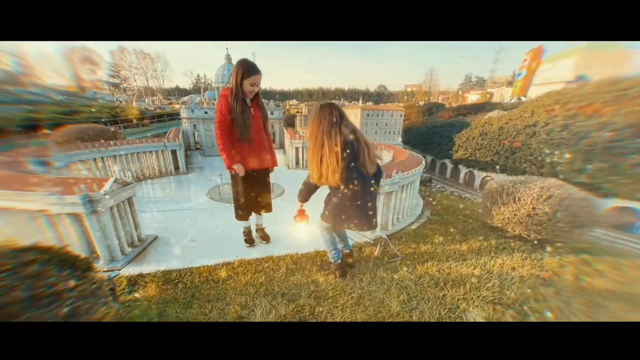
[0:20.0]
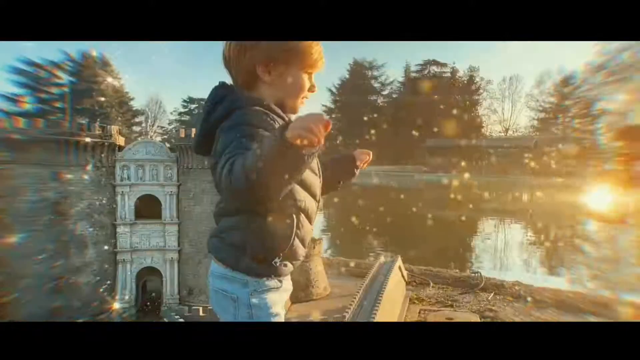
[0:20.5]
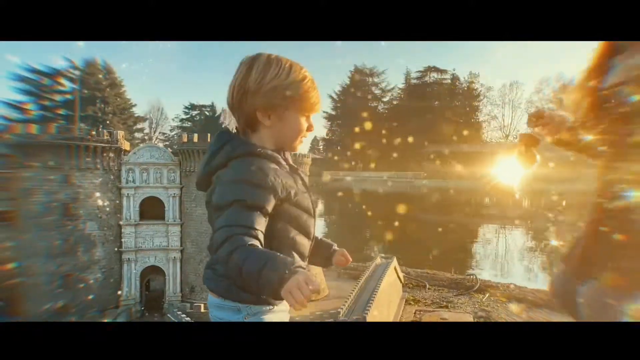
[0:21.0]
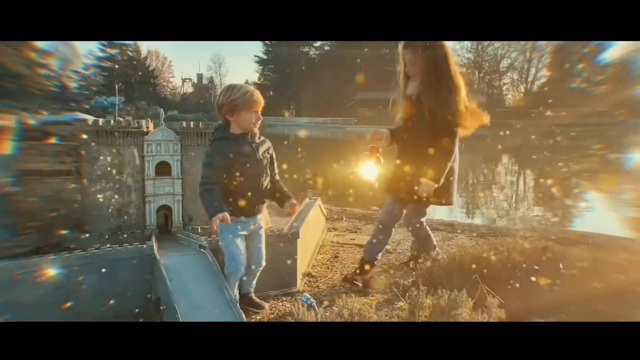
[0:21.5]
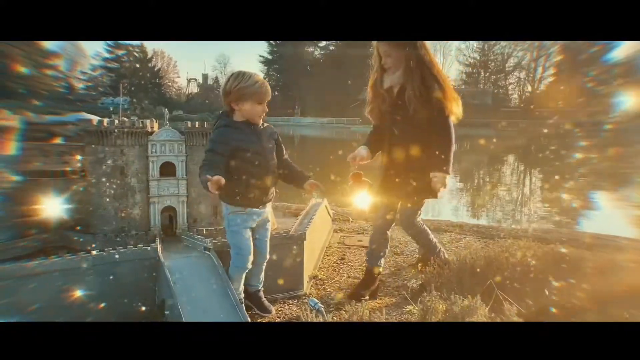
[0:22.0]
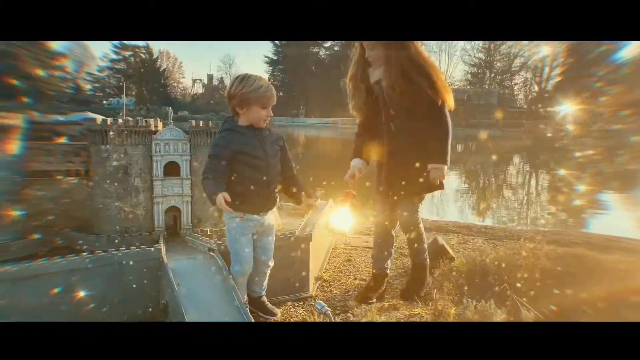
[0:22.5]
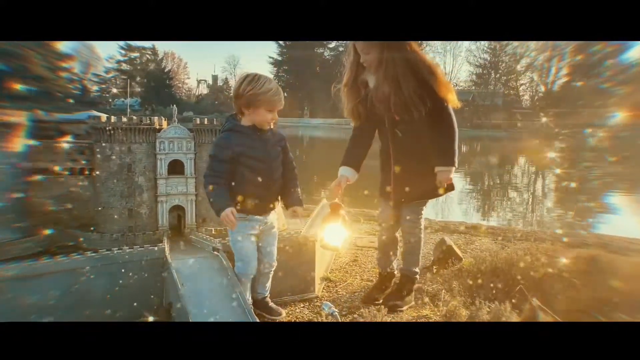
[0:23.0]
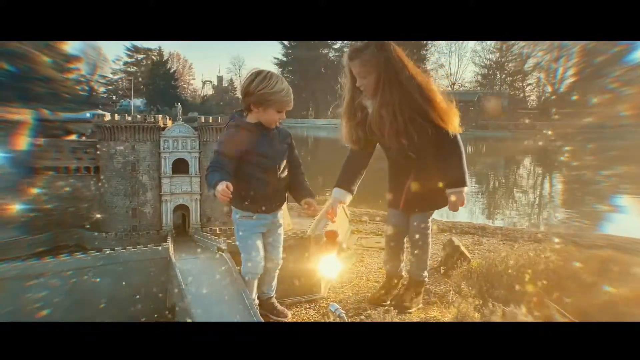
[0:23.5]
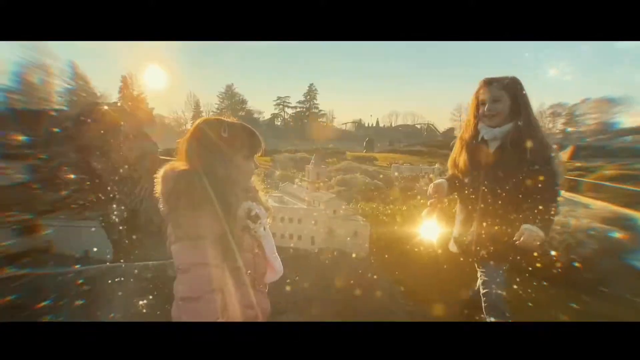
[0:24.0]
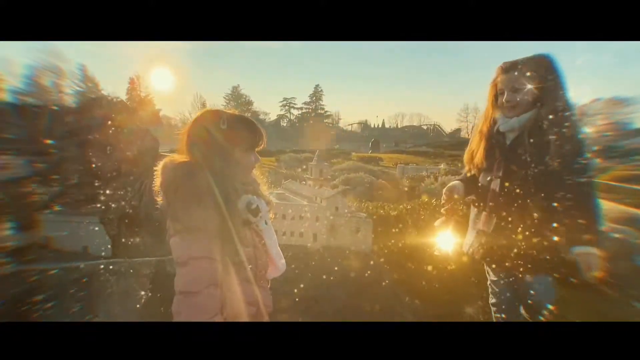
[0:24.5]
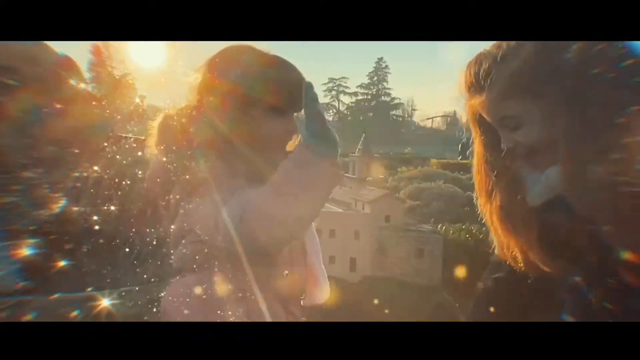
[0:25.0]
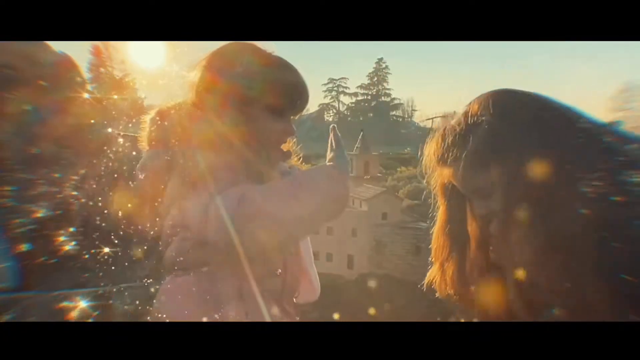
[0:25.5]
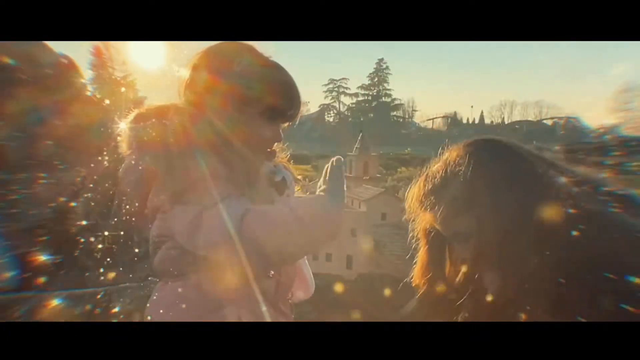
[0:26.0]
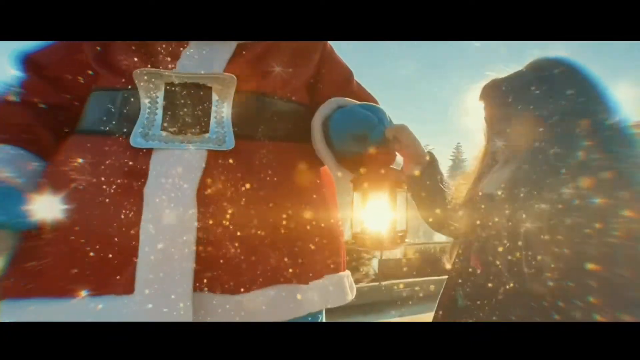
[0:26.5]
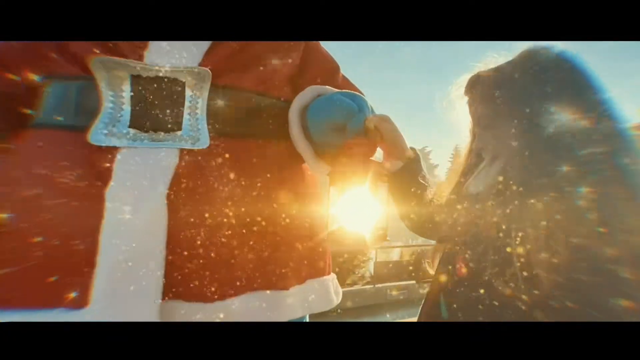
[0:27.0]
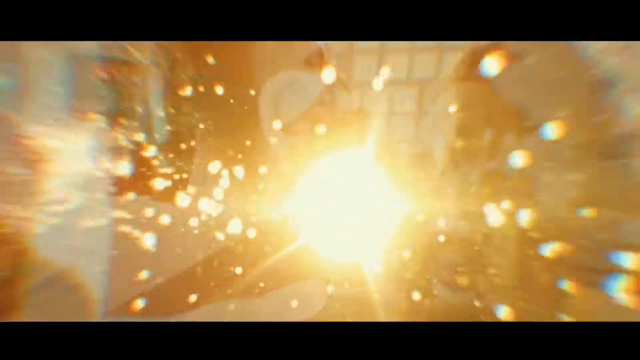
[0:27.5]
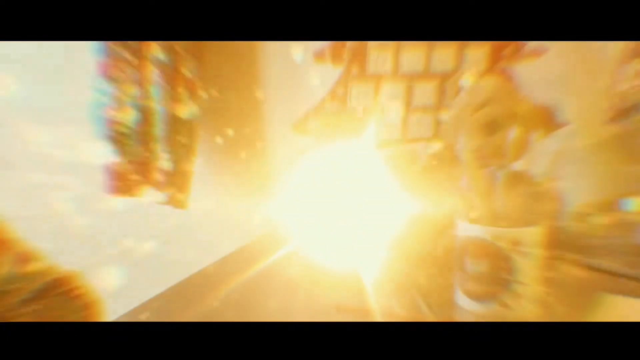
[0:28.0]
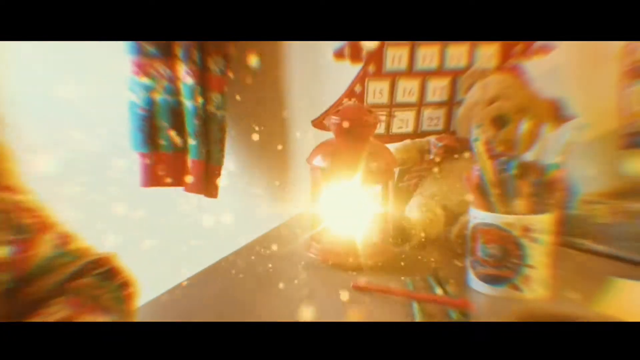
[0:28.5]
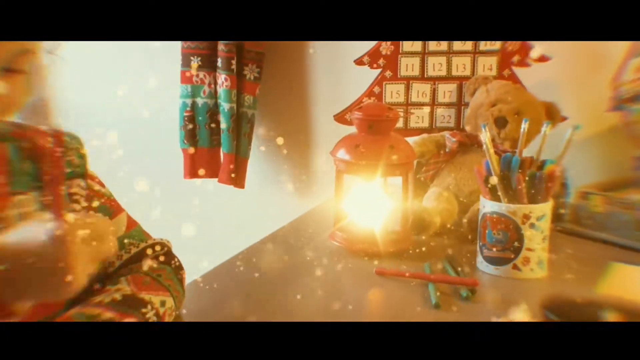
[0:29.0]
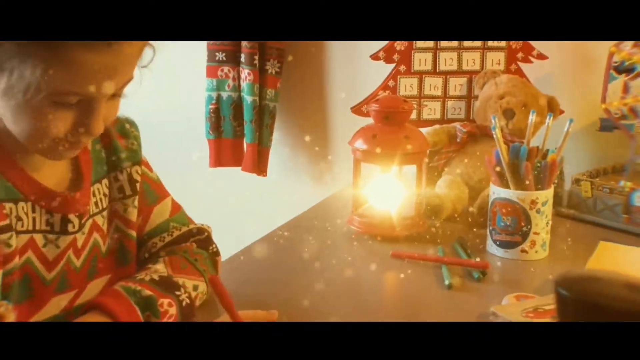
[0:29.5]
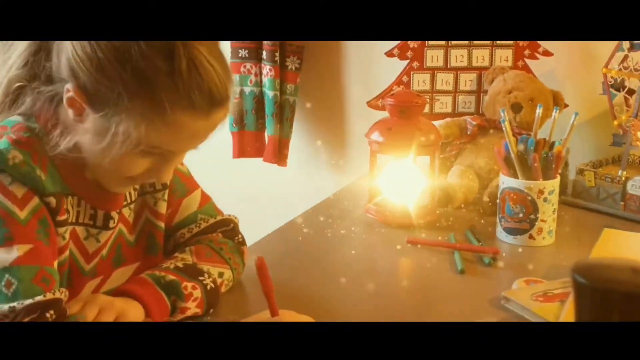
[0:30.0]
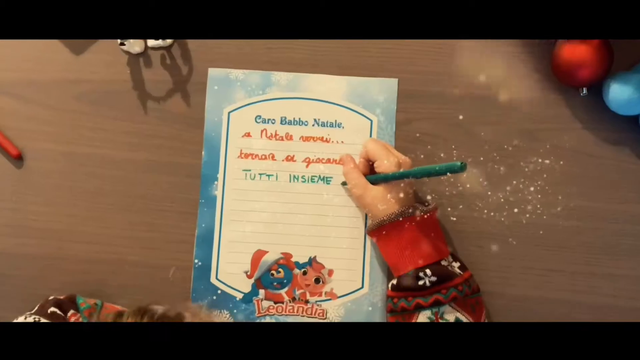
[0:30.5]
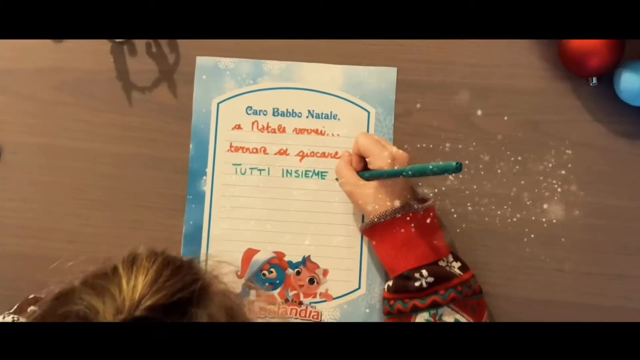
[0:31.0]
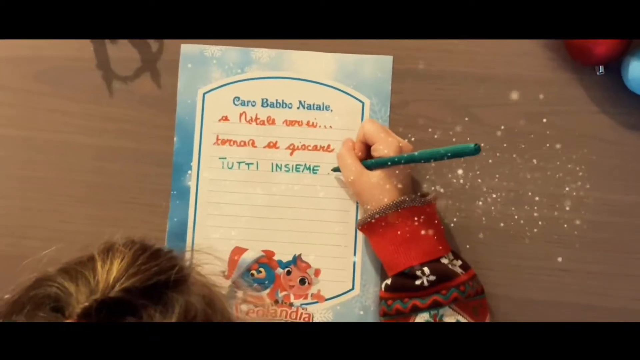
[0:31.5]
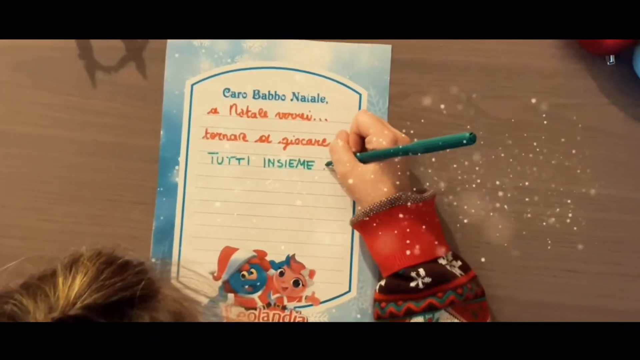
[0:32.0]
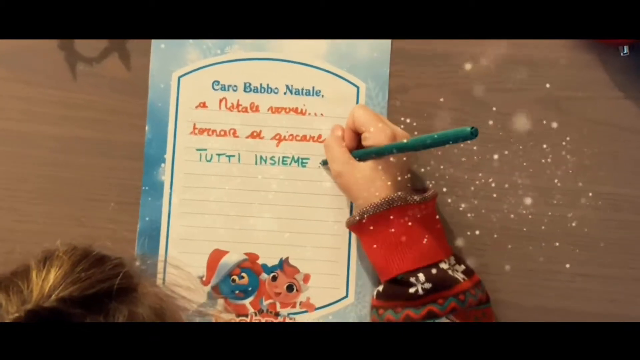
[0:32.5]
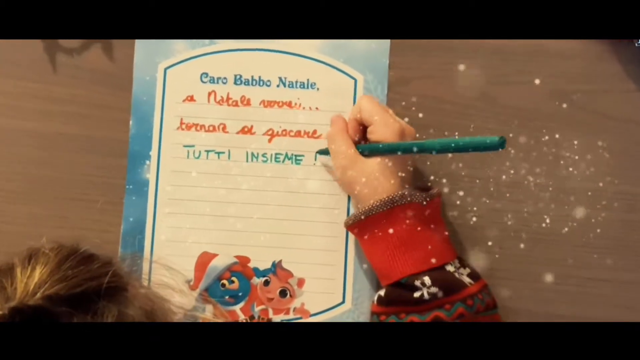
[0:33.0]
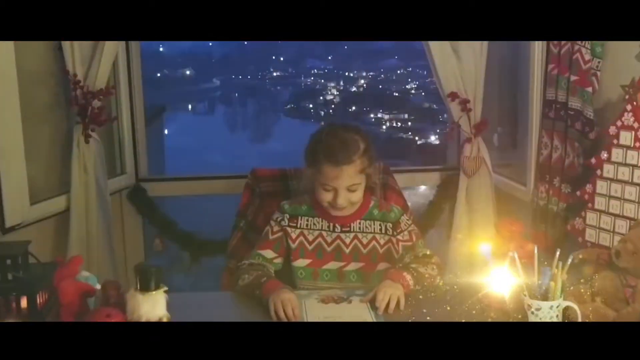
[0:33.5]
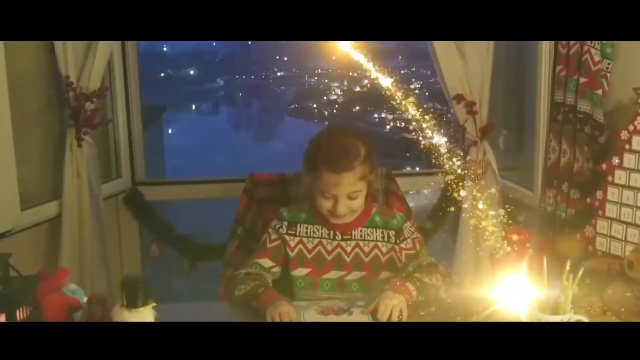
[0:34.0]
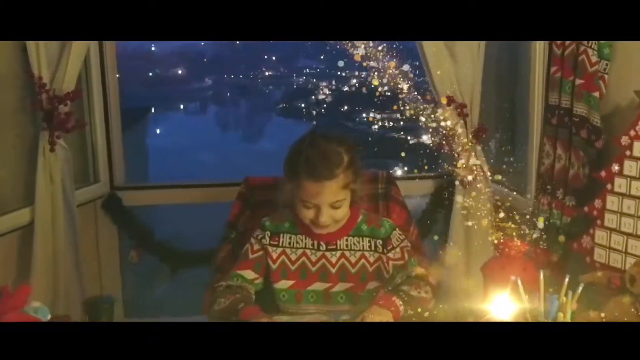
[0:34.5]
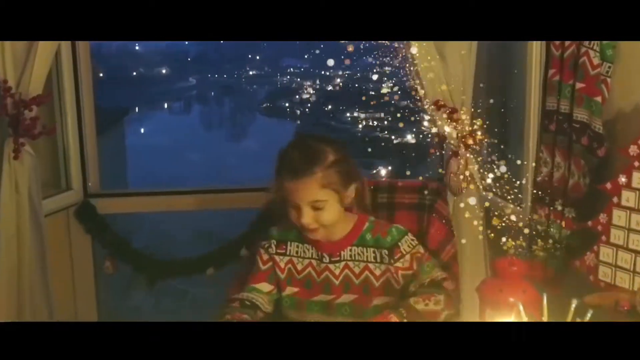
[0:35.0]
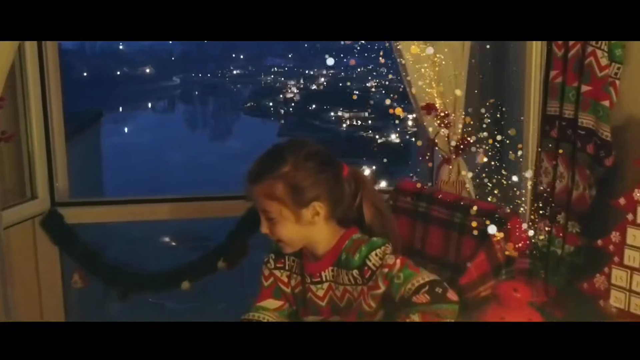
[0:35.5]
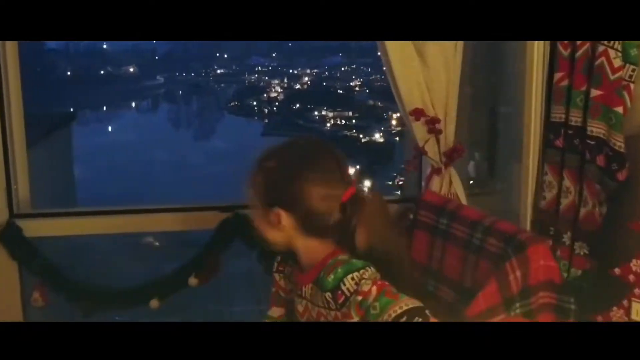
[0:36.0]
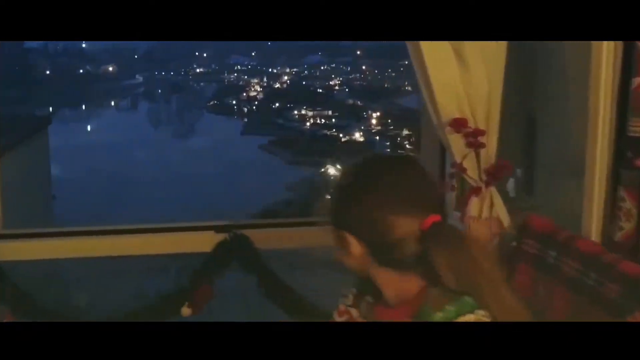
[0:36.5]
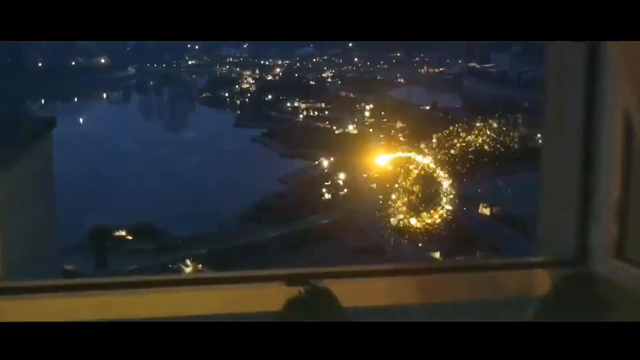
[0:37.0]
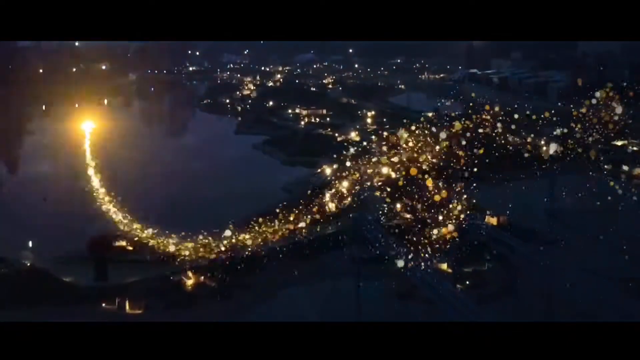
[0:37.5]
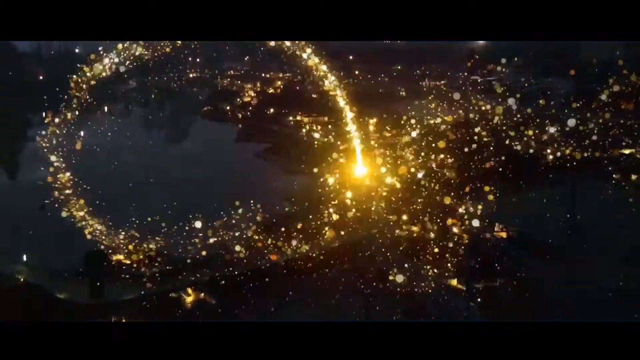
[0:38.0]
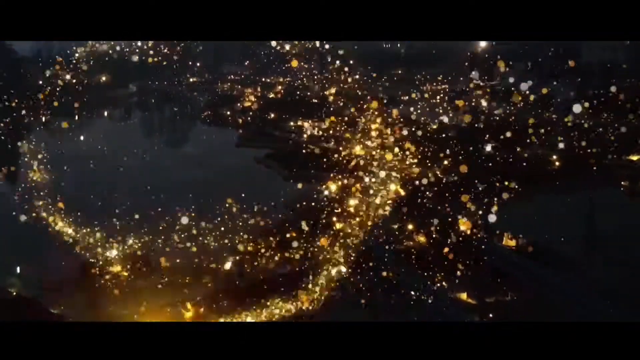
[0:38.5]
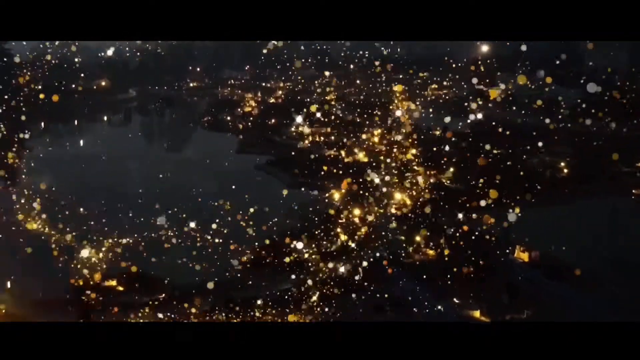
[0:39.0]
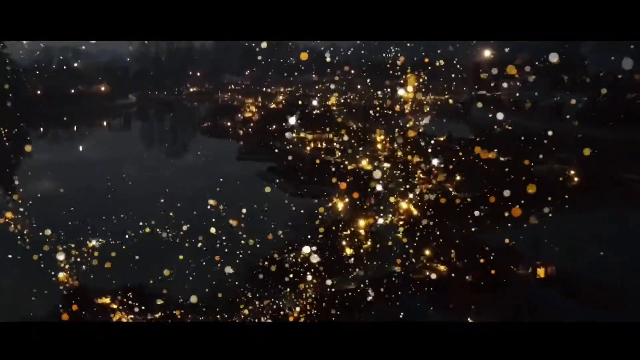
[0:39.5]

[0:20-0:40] The girl continues passing the magical lantern around. The kids all wear what look like black jackets. A blonde little boy jumps, looking happy. A shy little girl in a pink winter coat waves to her as she places the lantern down. The little mini lantern of magical light is held by the Smurf-esque character, who wears a red Santa suit. The girl is then back in her room drawing, writing words in an unidentified language with a dark green marker; the toy company appears to be called Leolandia. She draws an exclamation mark. She looks outside her window at a whole lake with lit-up houses along the side, and lights fly everywhere.